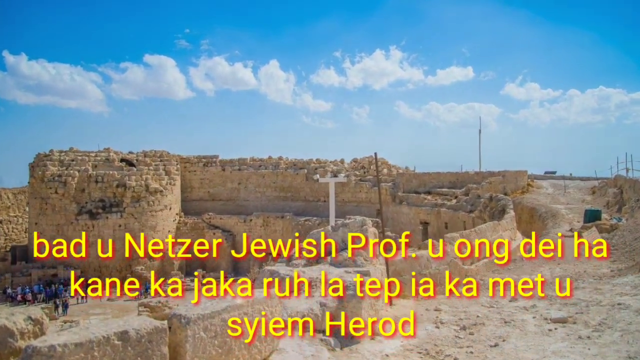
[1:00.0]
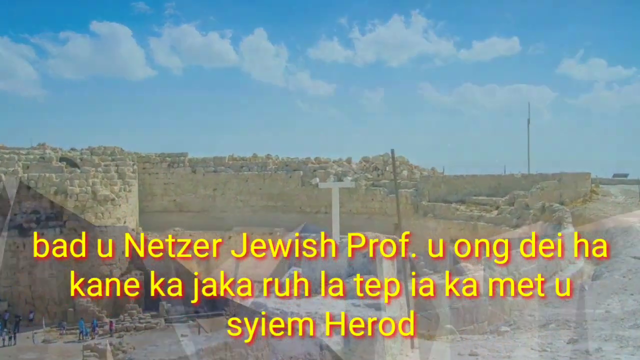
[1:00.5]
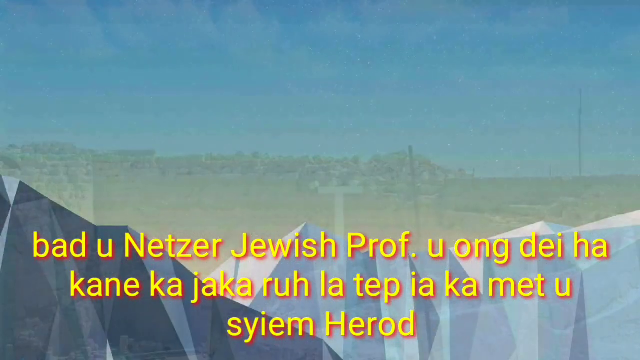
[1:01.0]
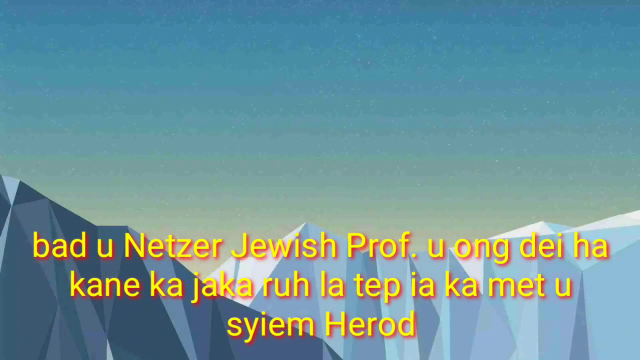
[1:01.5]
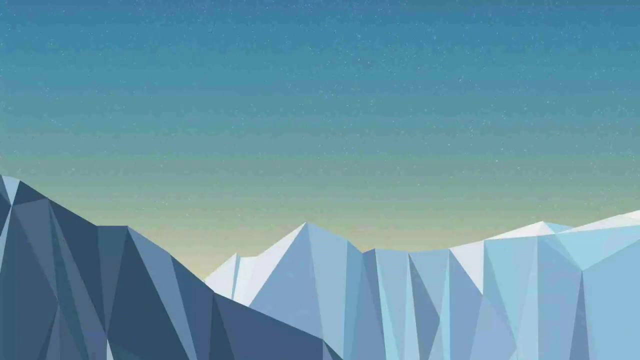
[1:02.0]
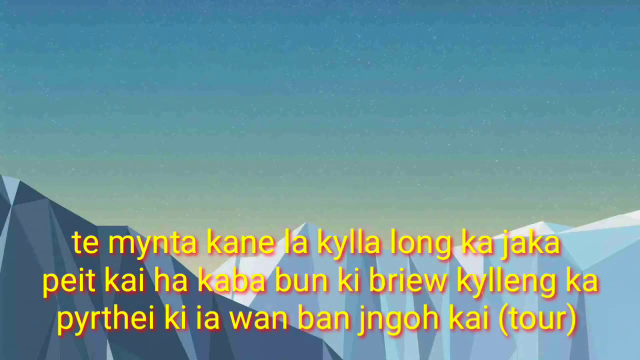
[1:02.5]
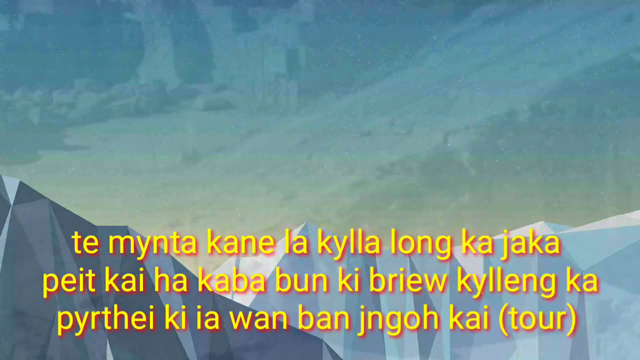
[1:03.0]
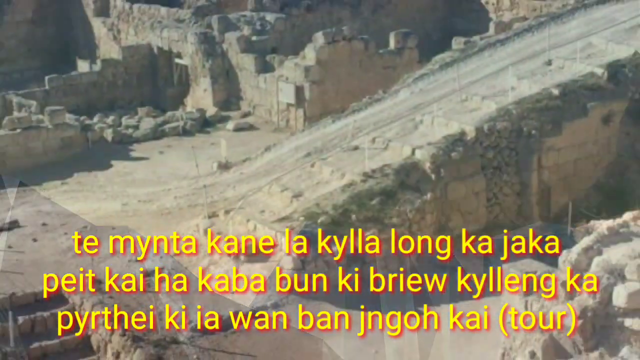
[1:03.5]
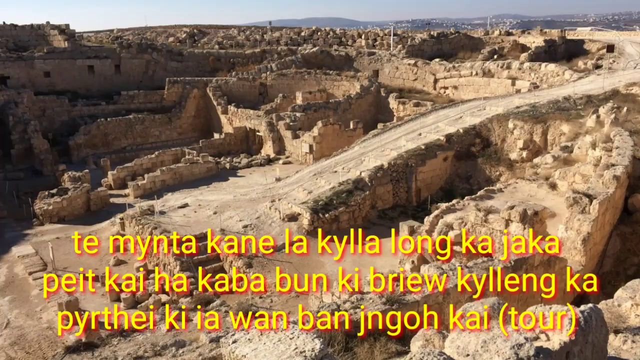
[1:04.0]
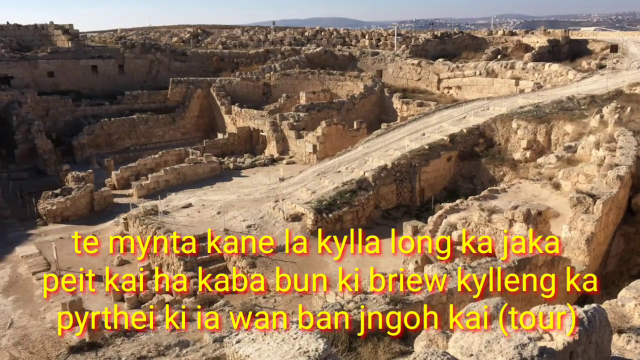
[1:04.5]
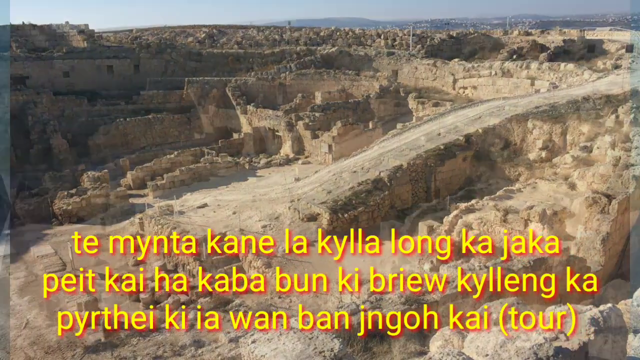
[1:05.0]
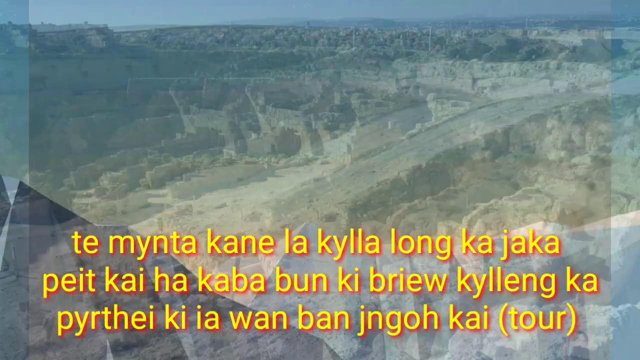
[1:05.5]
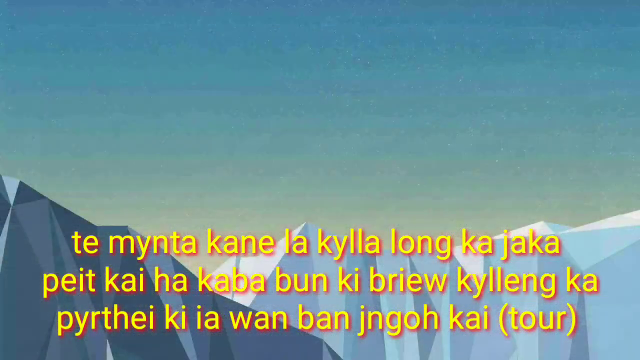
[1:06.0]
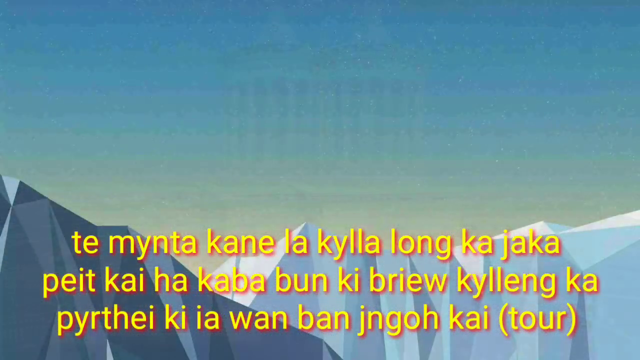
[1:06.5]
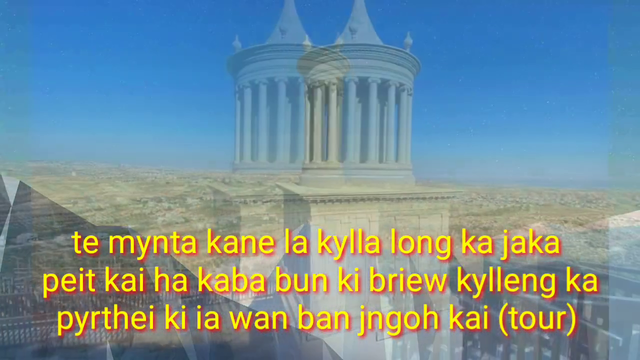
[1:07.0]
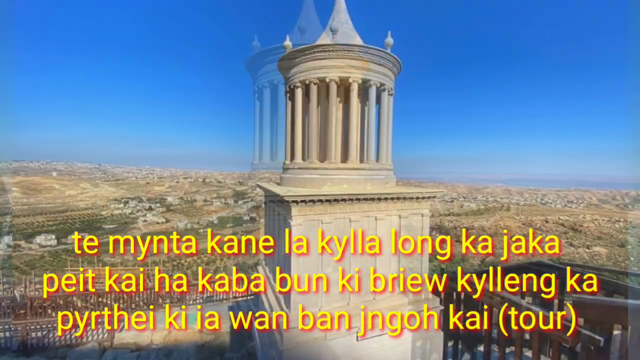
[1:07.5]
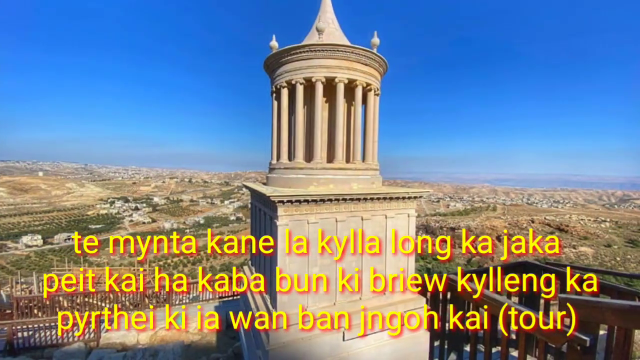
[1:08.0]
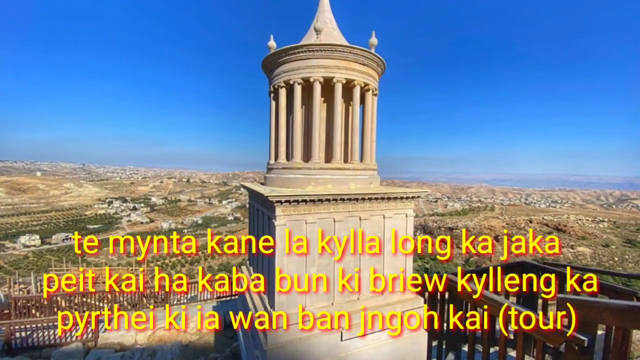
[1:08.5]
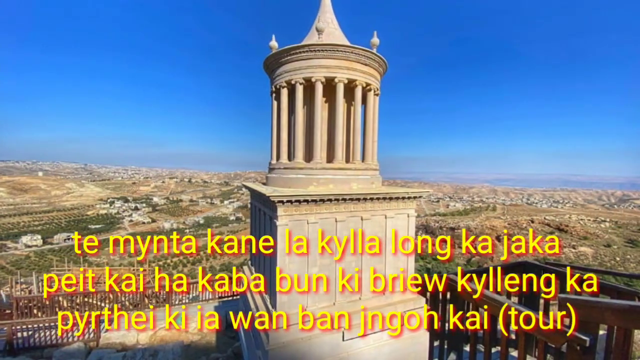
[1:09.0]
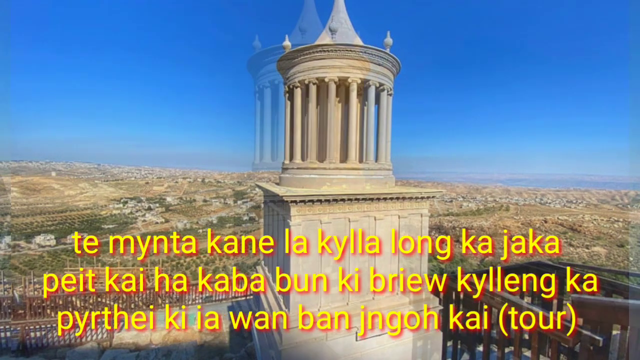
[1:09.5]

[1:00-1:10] The video continues showing various images of the stone structure, presumably of Herodium, with captioned text in yellow and red in a language other than English. The stone structures are dilapidated and broken down, with barely anything left standing in all the images. The images scroll by too quickly to describe individually, but they are all essentially the same: dilapidated stone structures that are crumbling or have crumbled down.